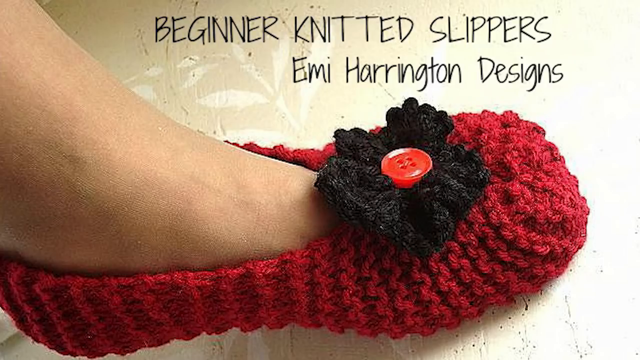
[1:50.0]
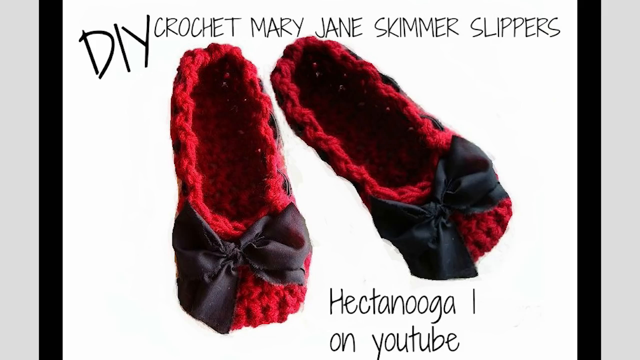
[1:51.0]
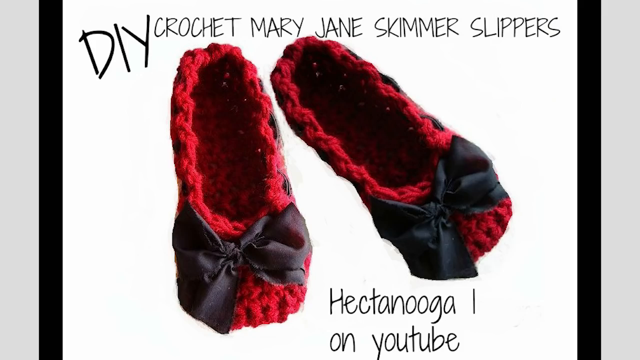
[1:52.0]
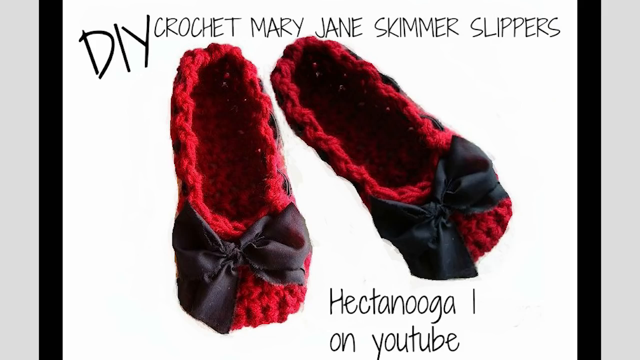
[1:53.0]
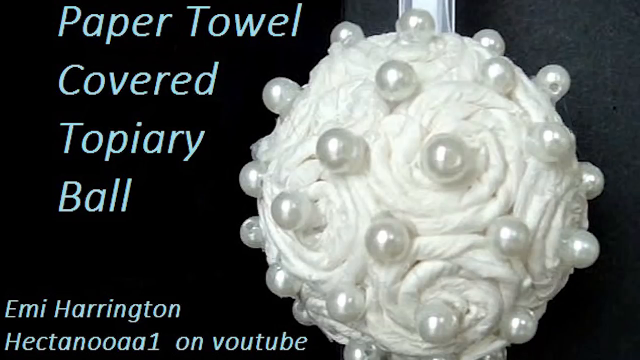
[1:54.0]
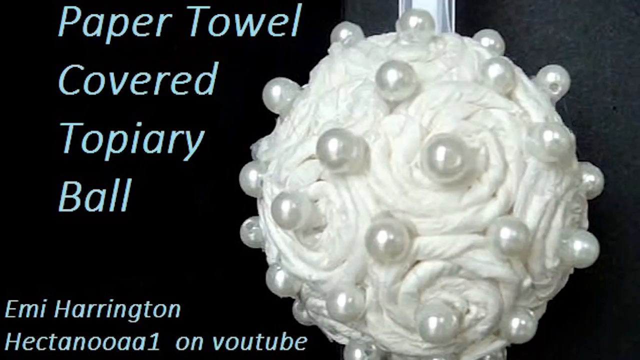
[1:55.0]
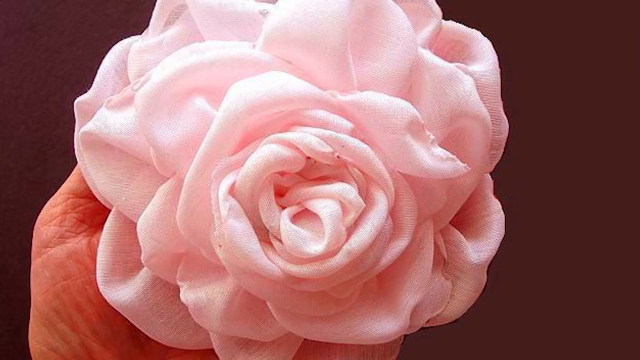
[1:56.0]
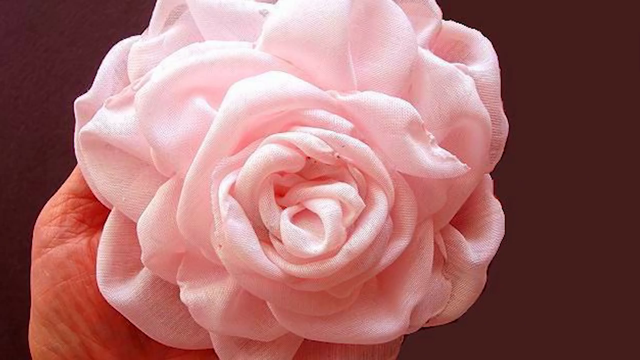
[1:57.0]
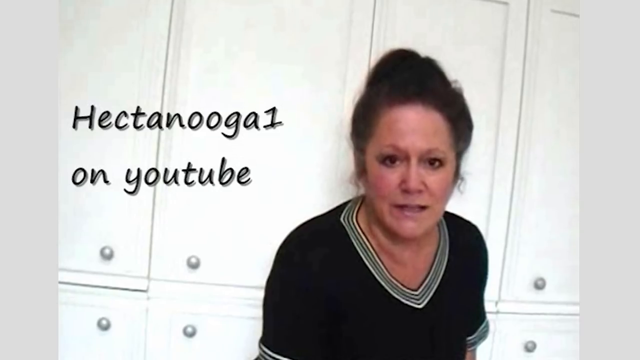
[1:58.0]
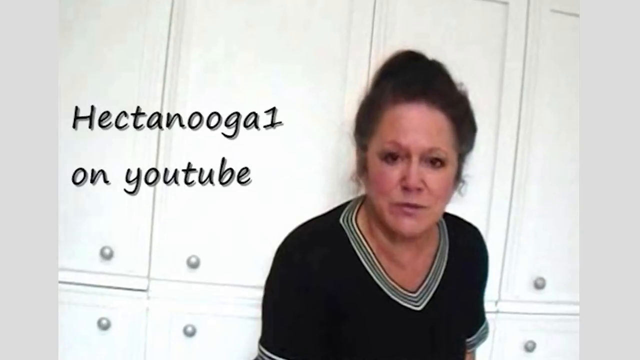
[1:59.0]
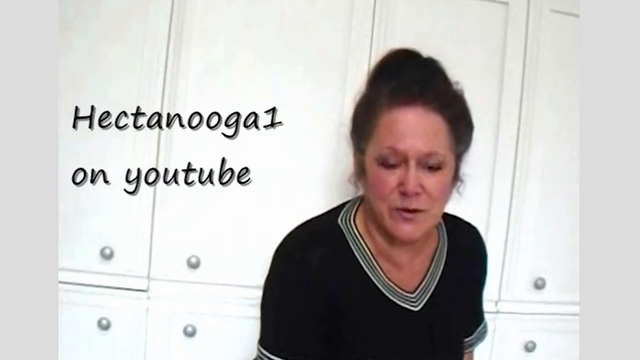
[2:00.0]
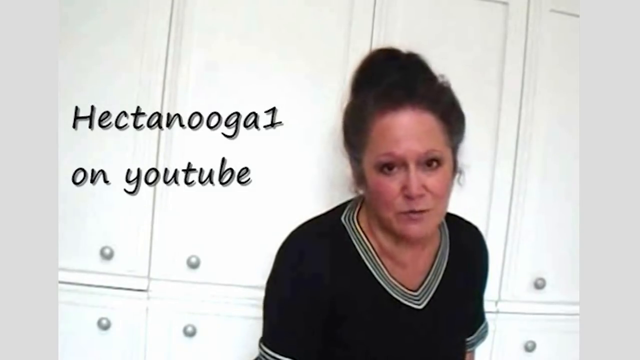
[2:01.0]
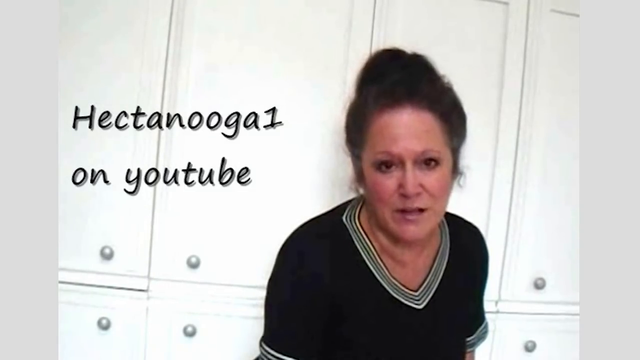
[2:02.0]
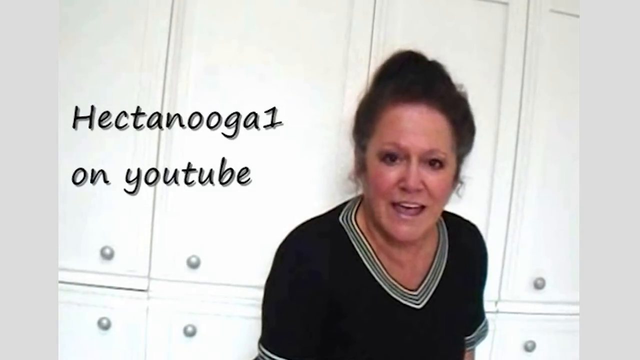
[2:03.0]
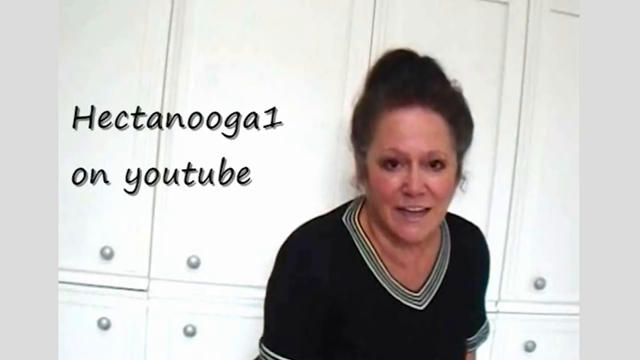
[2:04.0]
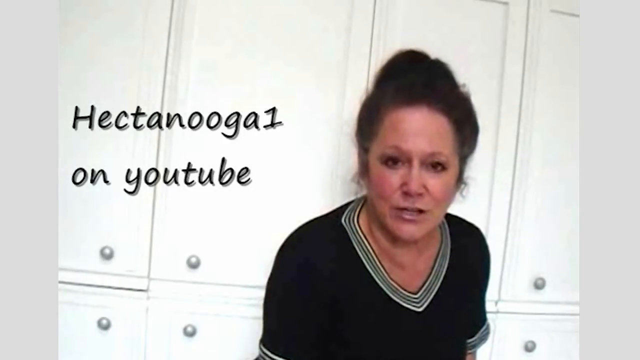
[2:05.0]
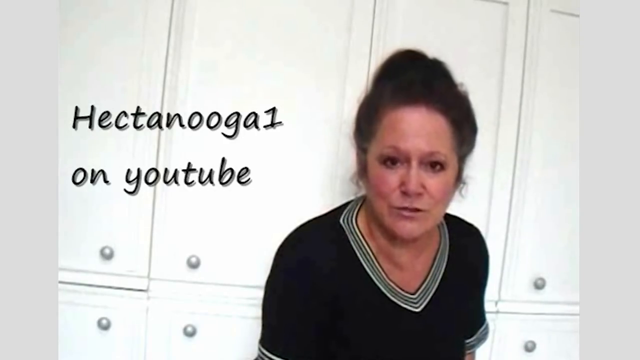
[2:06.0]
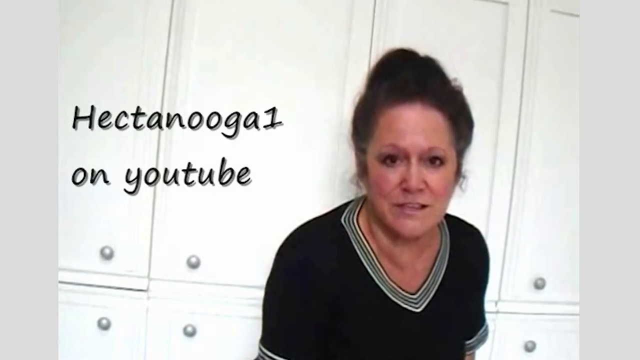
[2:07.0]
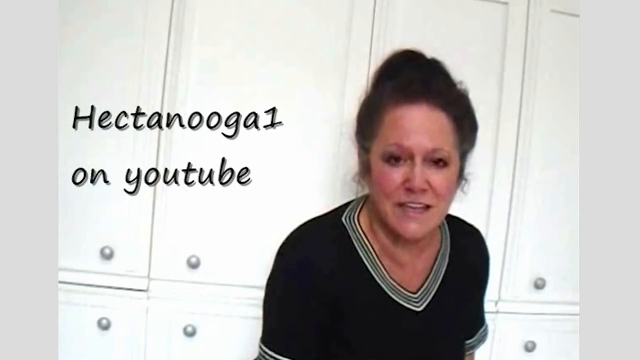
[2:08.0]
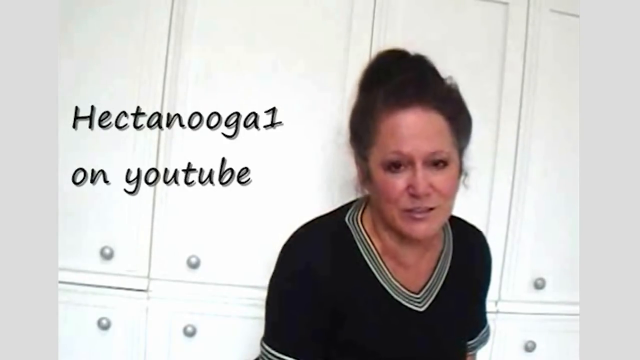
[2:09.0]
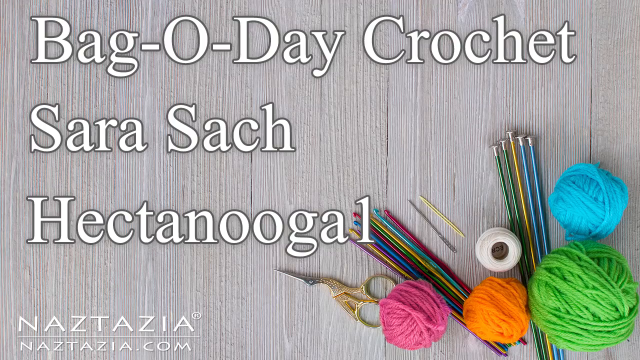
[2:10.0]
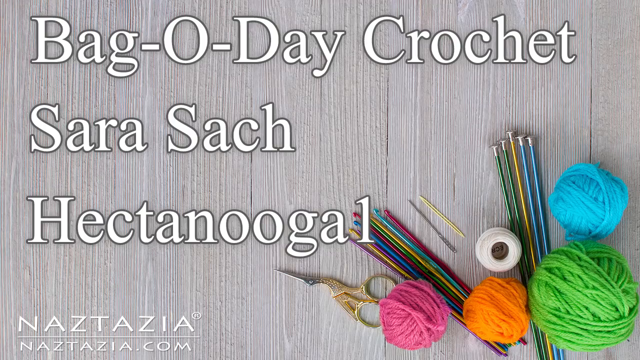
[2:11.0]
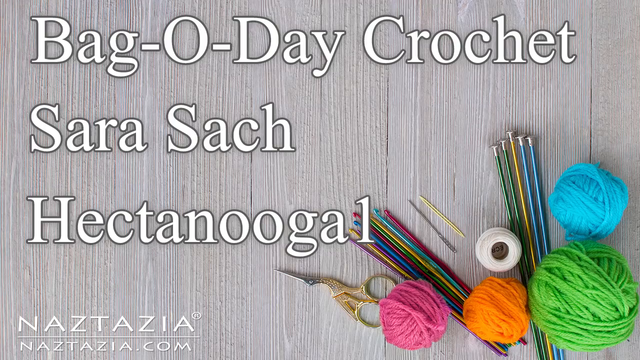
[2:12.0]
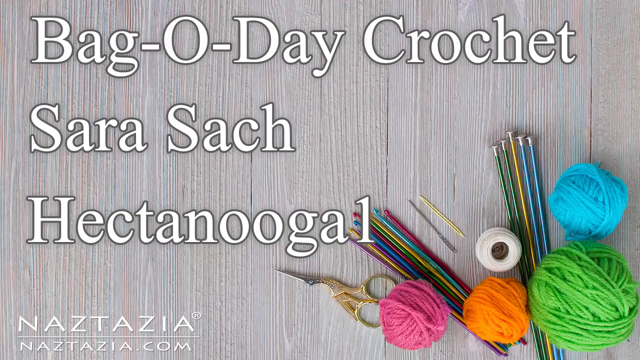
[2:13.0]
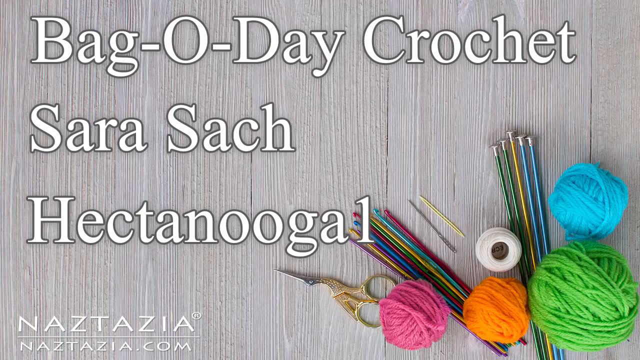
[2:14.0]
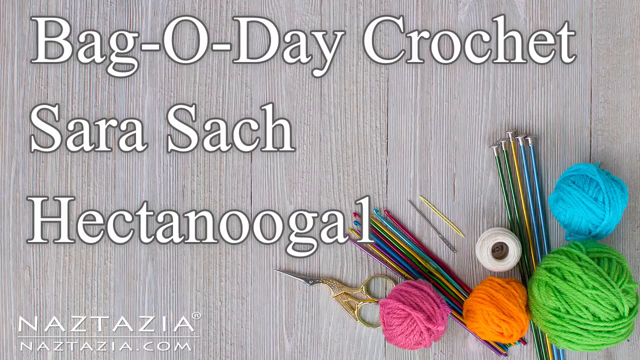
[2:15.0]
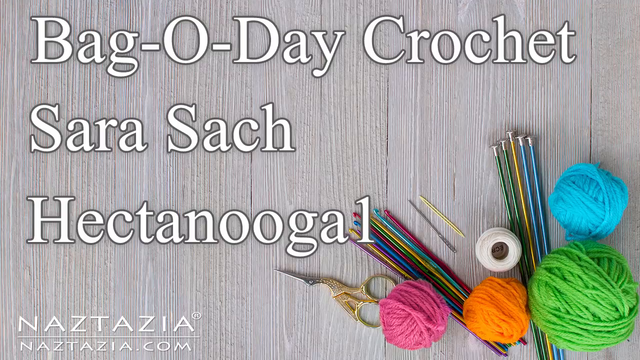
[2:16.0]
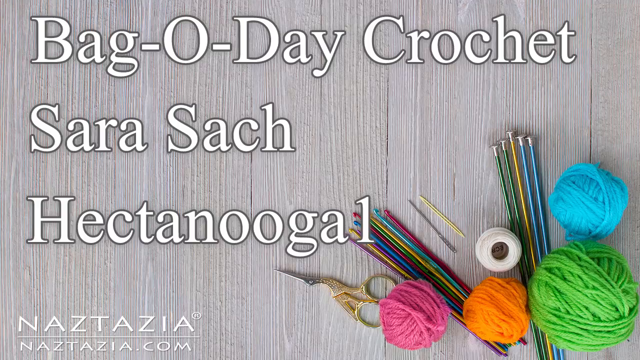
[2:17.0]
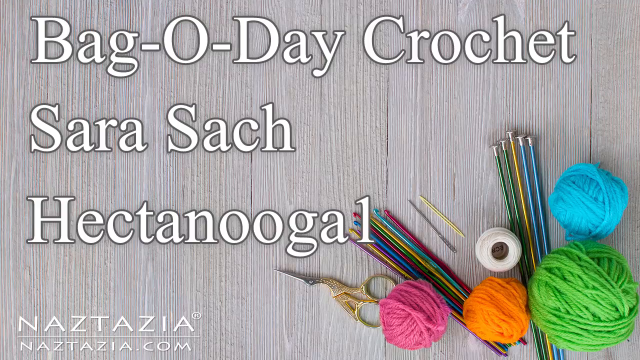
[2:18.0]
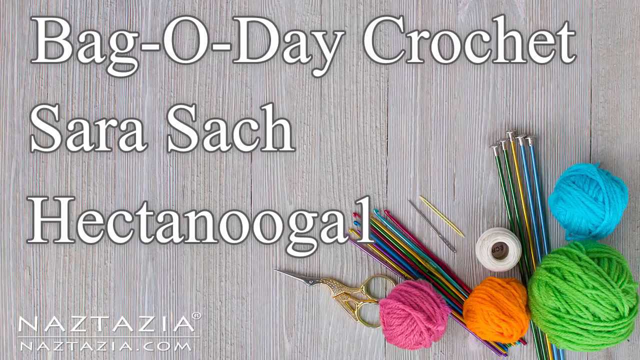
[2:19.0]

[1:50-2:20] An aerial view shows a pair of similar slippers, slightly different because they have a black bow on the front and possibly some kind of leather or cord stitching around the edges. The banner reads "DIY Crochet Mary Jane Skimmer Slippers", and at the bottom it says "Hector Nugent 1" on YouTube. The next image is a black screen with light blue lettering reading "paper towel covered topiary ball, Emmy Harrington". It shows a topiary ball covered in paper towels in a kind of cinnamon-bun effect, also covered in pearls with copious amounts of visible glue attaching them, and a white ribbon at the top, so the whole thing is white. The next image is of a pink rose that seems to be made of a fairly stiff, light pink see-through fabric. The woman in front of the wardrobes appears again, still talking to the camera and starting to smile slightly. The next screen shows what appears to be a tabletop or perhaps grey wooden floorboards with visible grain. White lettering reads "Bagaudet Crochet, Sarasac, Hectanougal", and at the bottom of the page it says "Naztazia". In the bottom right-hand corner is a selection of knitting and crochet implements: different kinds of knitting needles and crochet needles, some sewing needles, a pair of gold scissors, some small balls of wool in pink, orange, green and blue, and what looks like some sort of white thread or string.